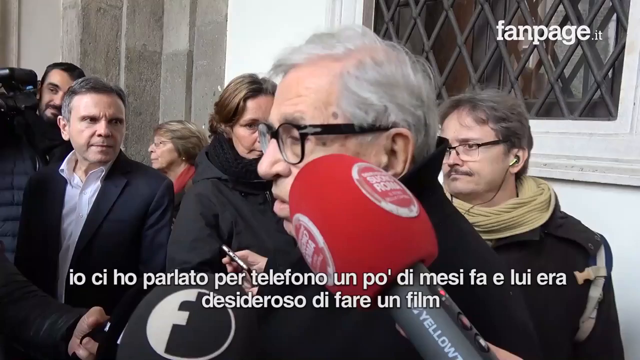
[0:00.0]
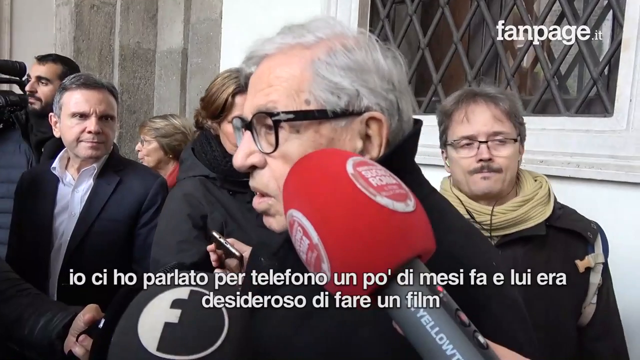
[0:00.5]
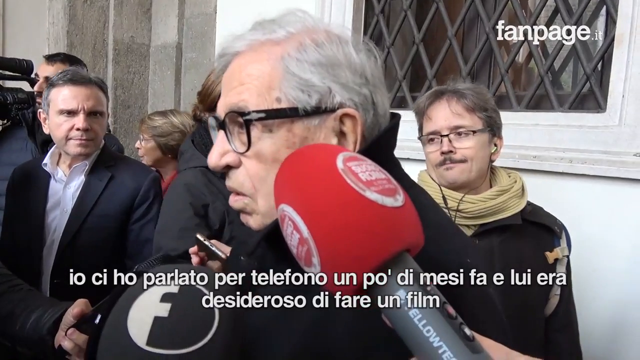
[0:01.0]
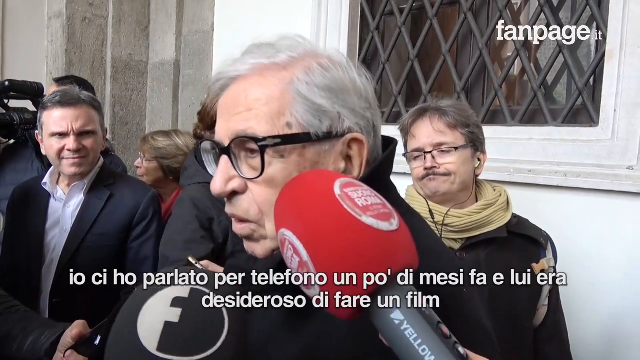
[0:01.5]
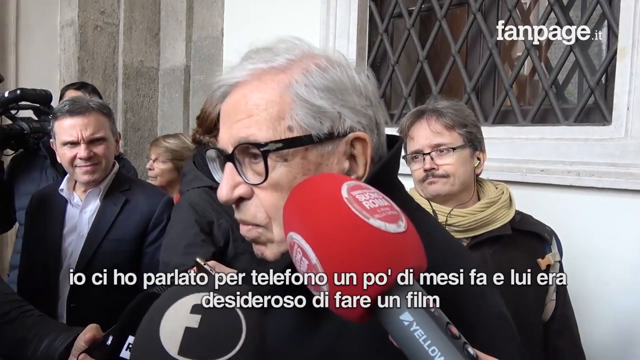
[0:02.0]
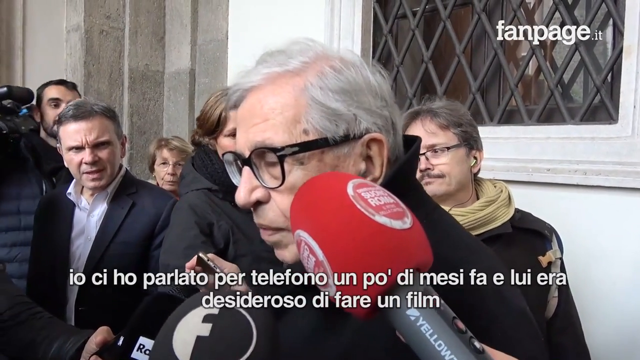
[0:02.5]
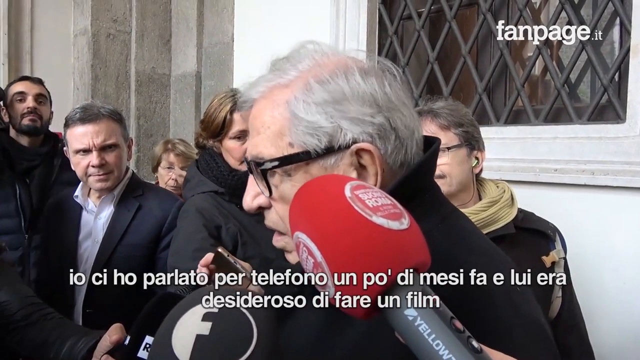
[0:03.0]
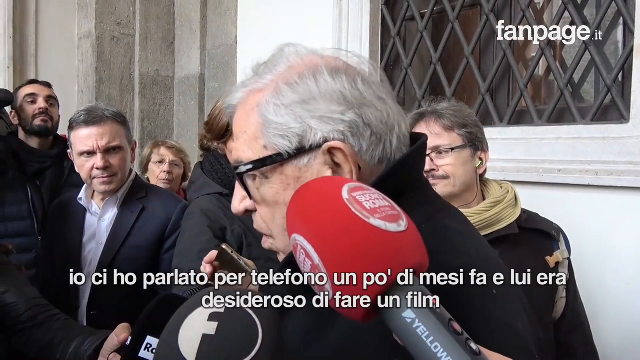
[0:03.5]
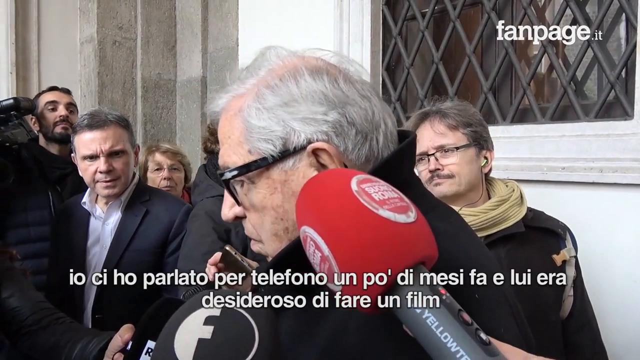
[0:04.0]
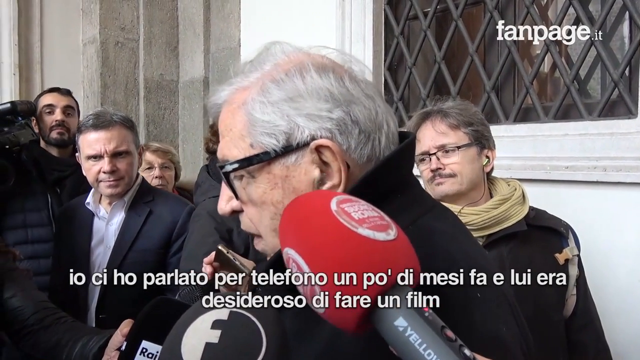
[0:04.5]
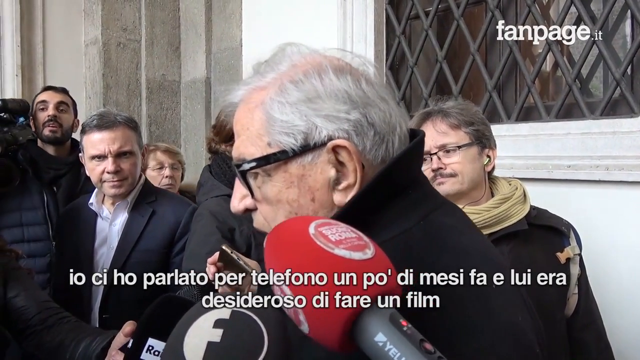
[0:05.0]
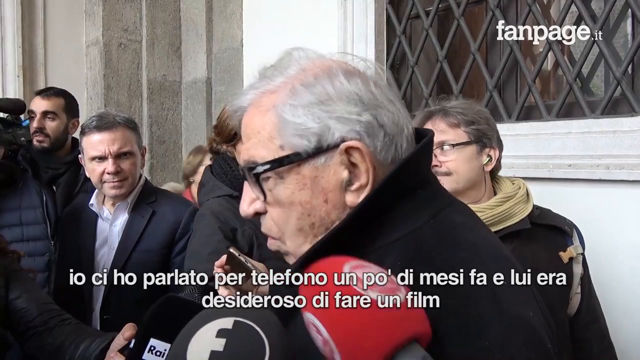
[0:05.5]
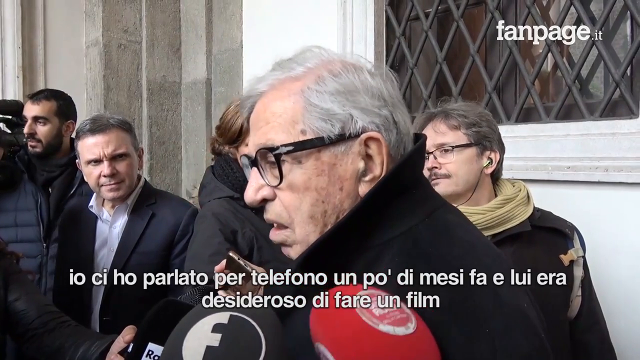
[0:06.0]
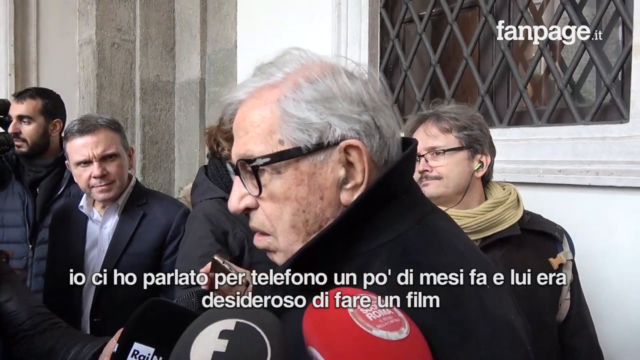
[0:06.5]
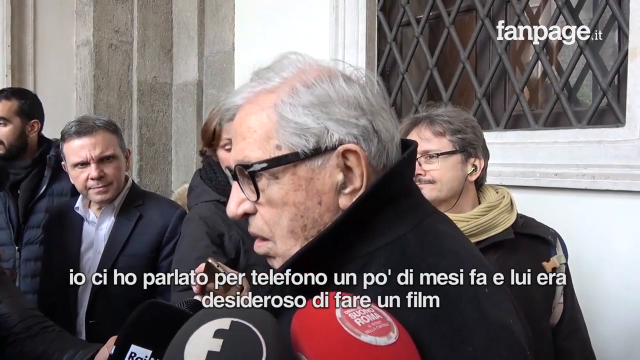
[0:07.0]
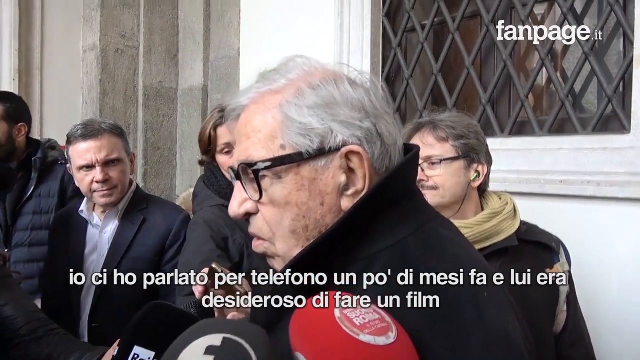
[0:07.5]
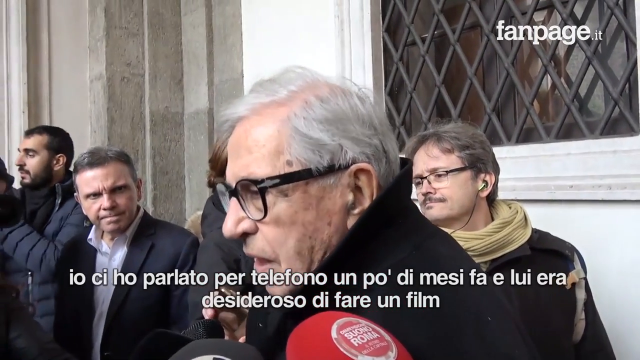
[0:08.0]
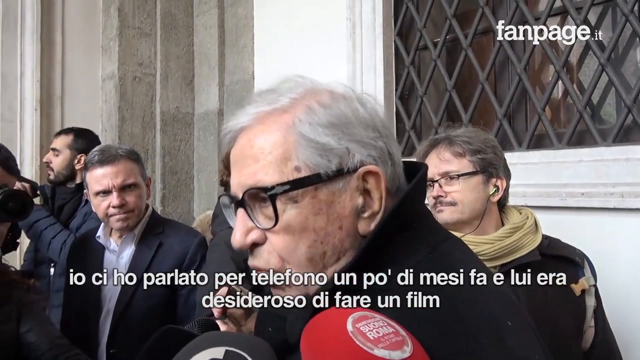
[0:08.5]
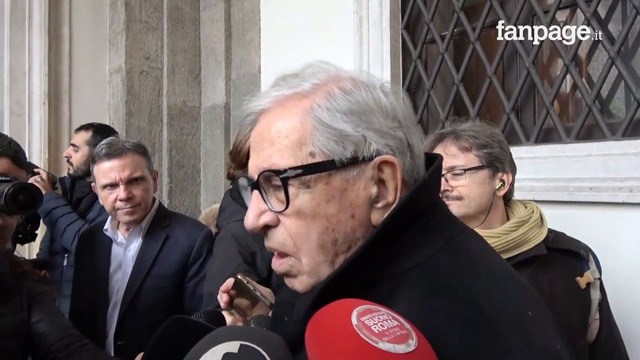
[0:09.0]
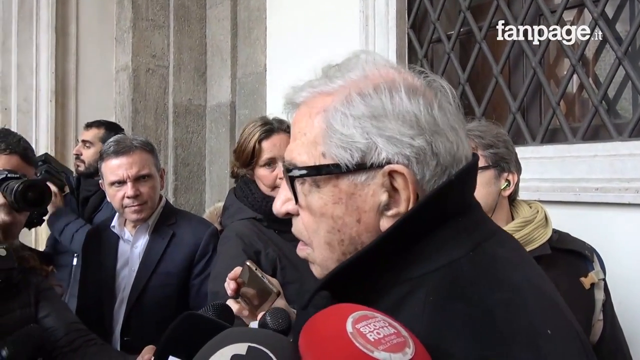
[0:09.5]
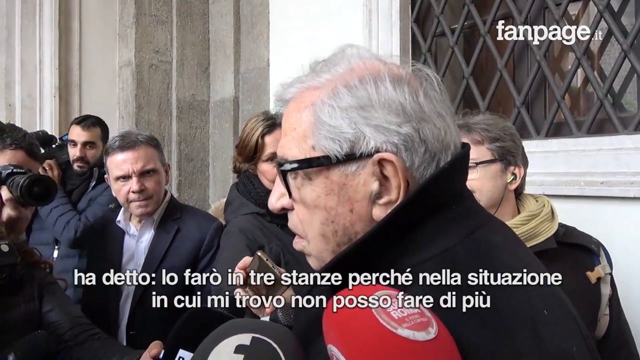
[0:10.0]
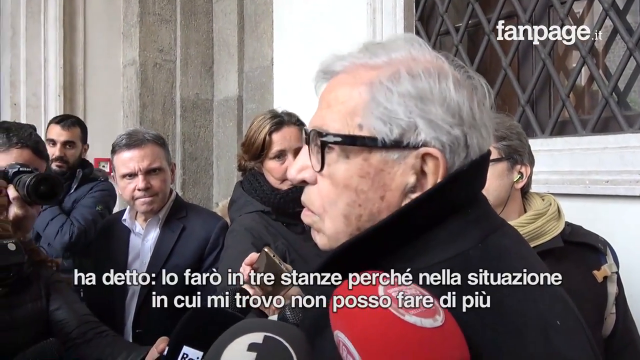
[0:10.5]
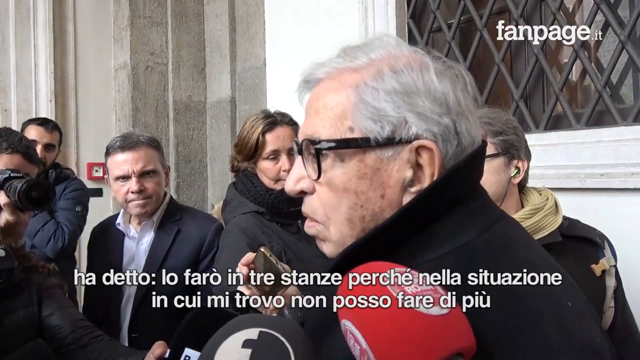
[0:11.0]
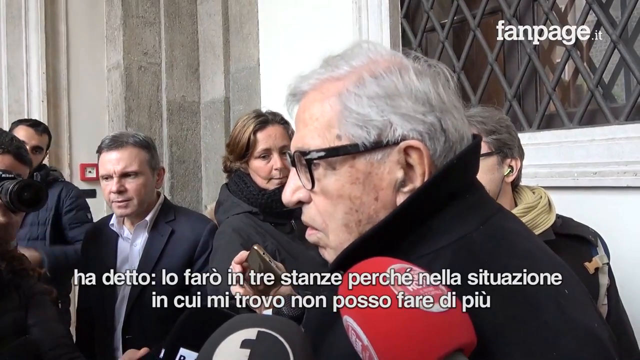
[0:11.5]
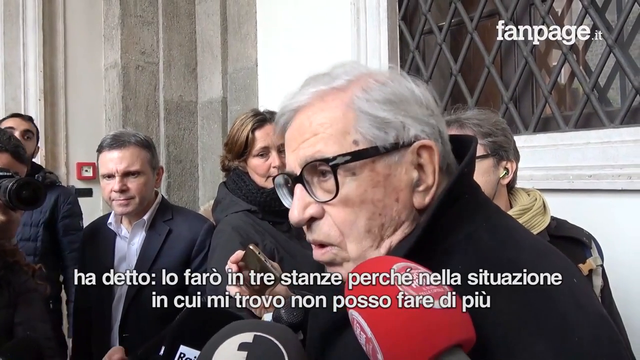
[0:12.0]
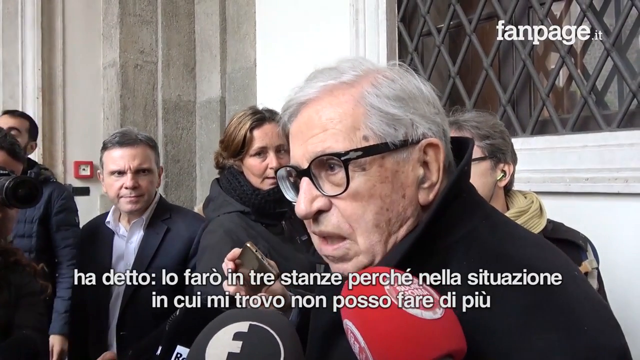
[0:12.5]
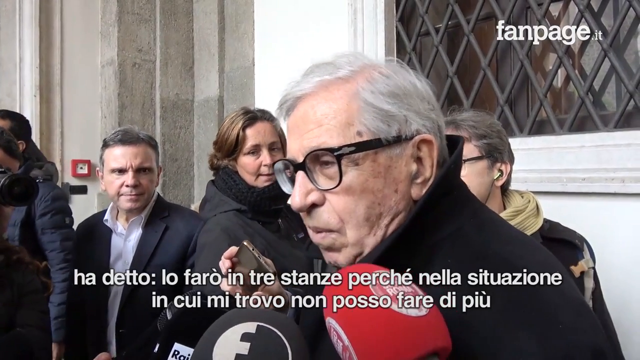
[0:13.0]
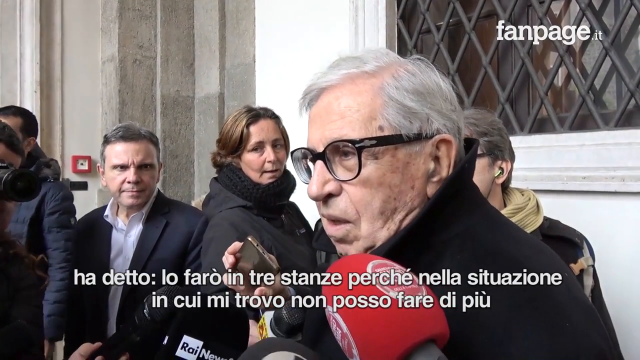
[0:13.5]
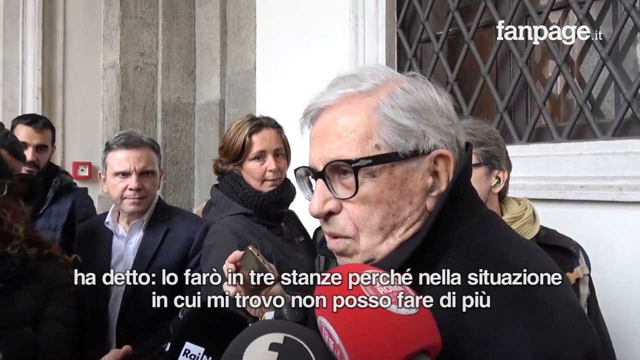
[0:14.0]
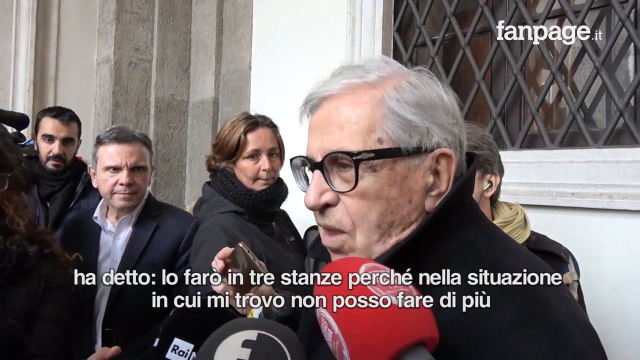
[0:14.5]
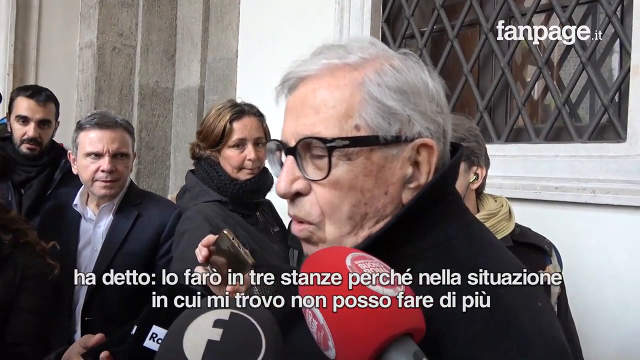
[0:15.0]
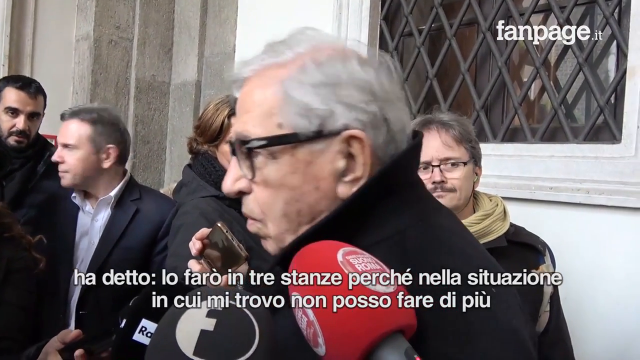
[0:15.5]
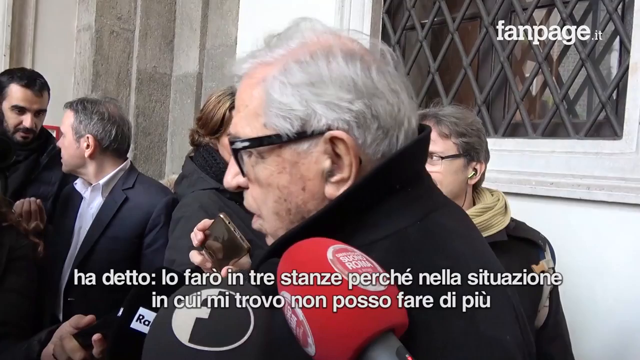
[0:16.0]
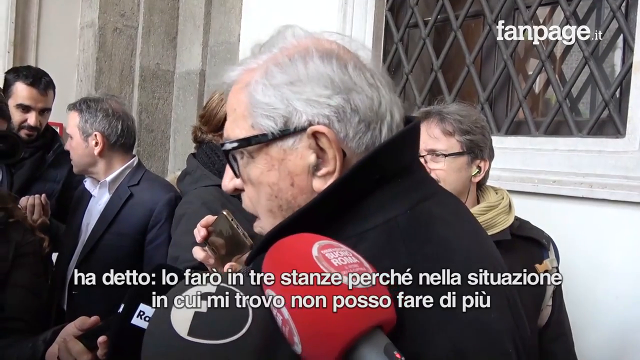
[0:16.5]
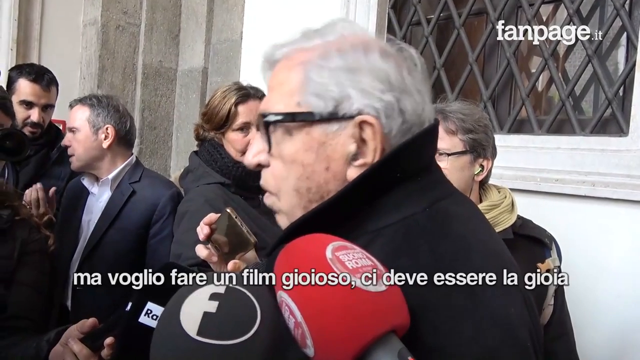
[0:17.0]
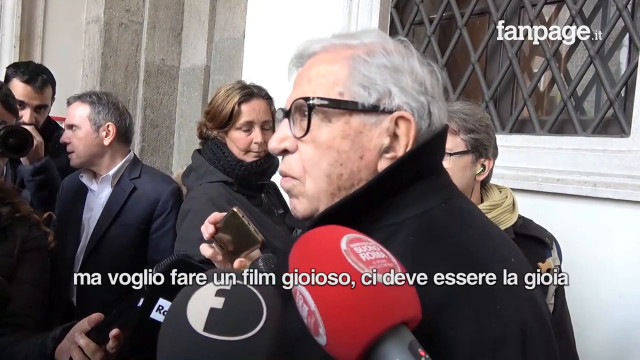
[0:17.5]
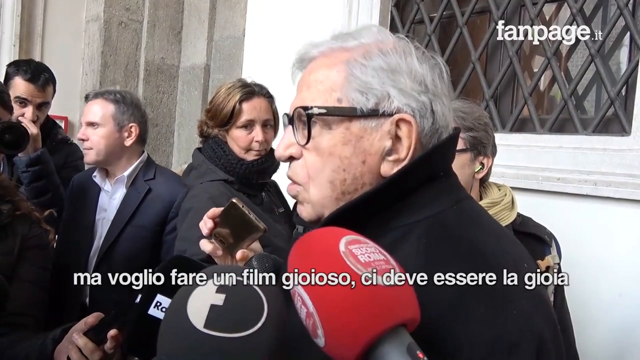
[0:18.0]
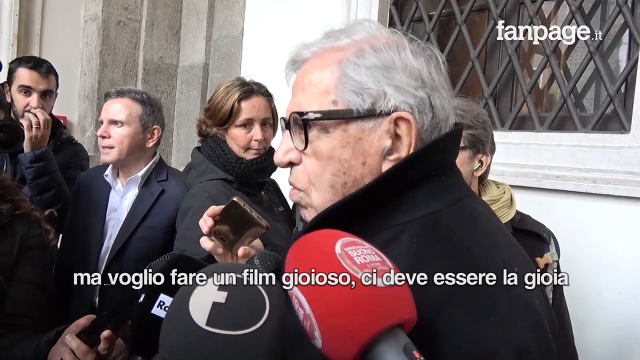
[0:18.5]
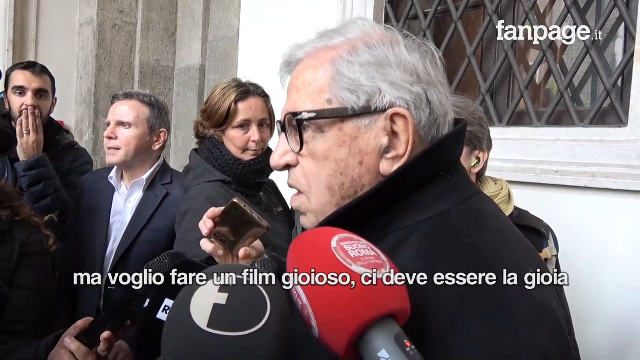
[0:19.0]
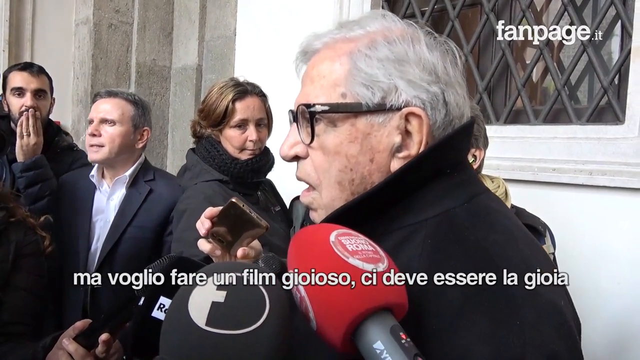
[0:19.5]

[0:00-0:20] The video is from fanpage.it, and an Italian subtitle runs along the bottom of the screen. An interview takes place outside. A large red microphone is in front of an elderly man wearing thick-framed glasses; he faces the left side, so his side profile is visible. He has silver hair and wears a high-collared coat. Behind him a group of people are standing around, dressed in winter clothing, and one of them holds what looks like a camcorder or a professional camera. The people behind him appear to be the press, reporters and cameramen, and a number of mics are in front of him. He talks at a steady pace, neither too fast nor too slow, with a fairly neutral expression. He does not stay still and moves around a bit, but his expression stays the same. He has sunspots on the side of his face.